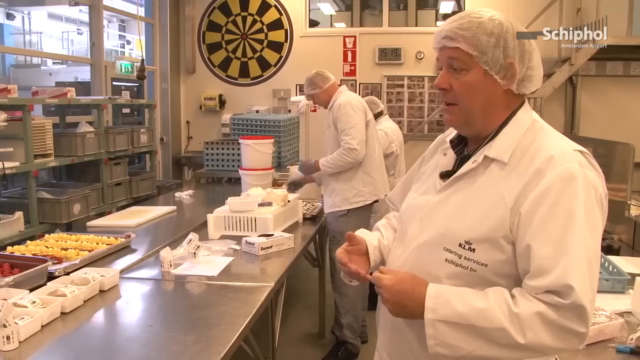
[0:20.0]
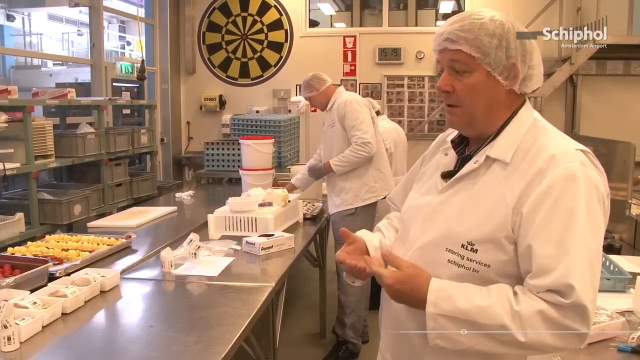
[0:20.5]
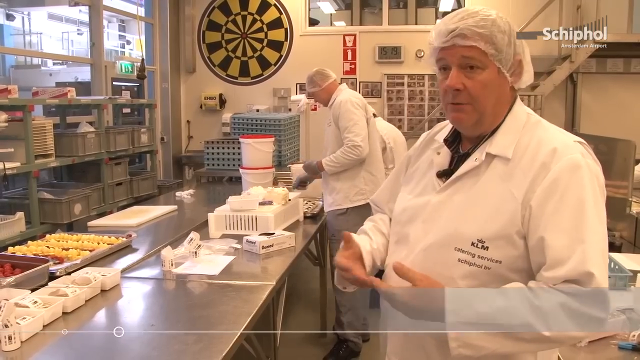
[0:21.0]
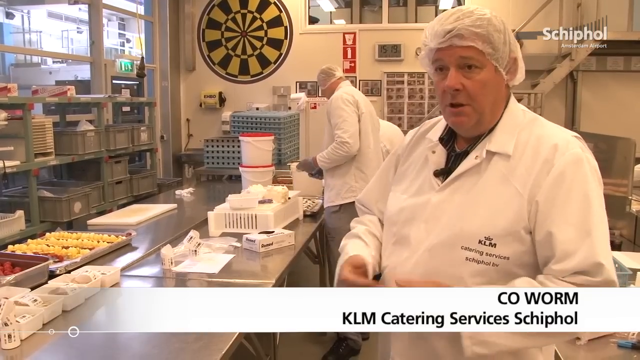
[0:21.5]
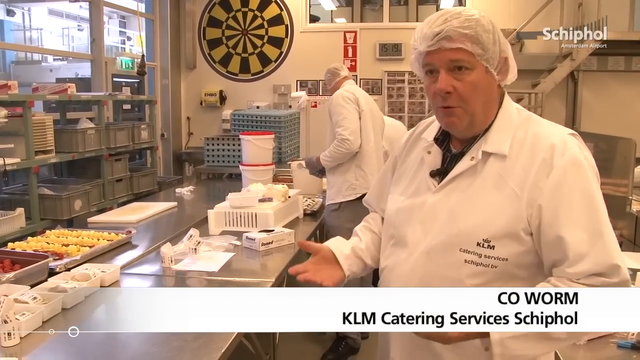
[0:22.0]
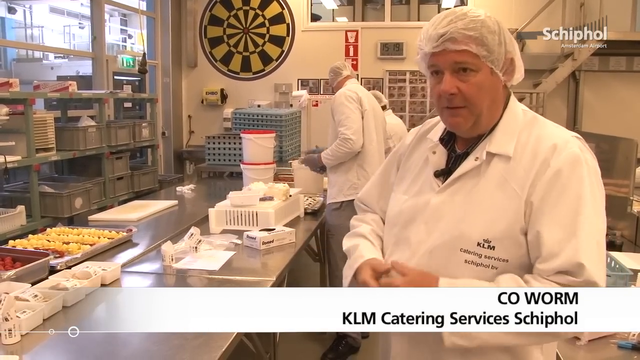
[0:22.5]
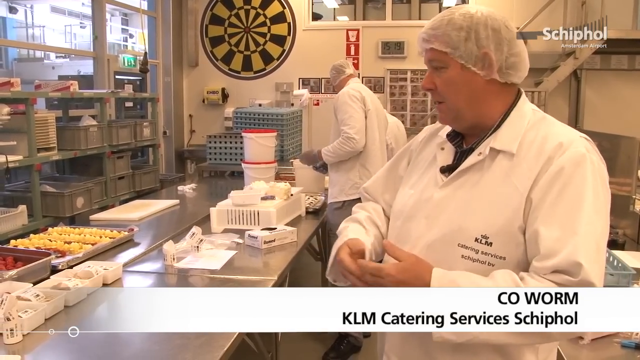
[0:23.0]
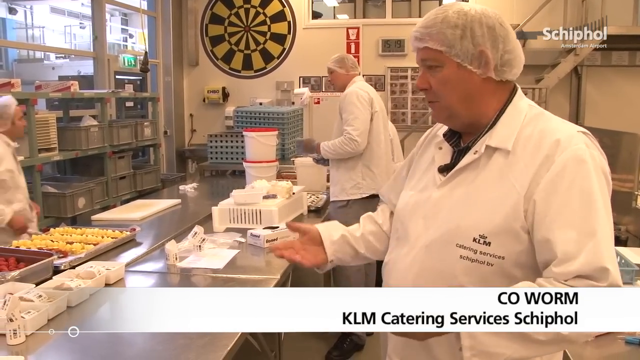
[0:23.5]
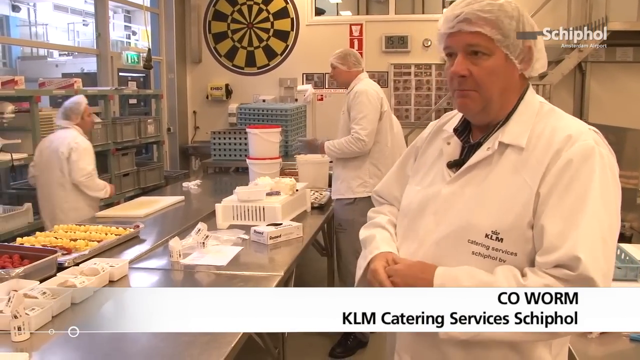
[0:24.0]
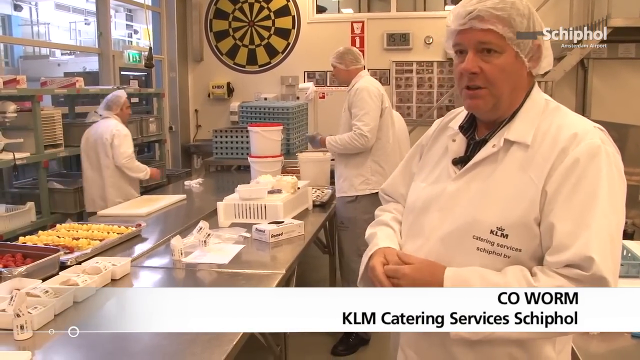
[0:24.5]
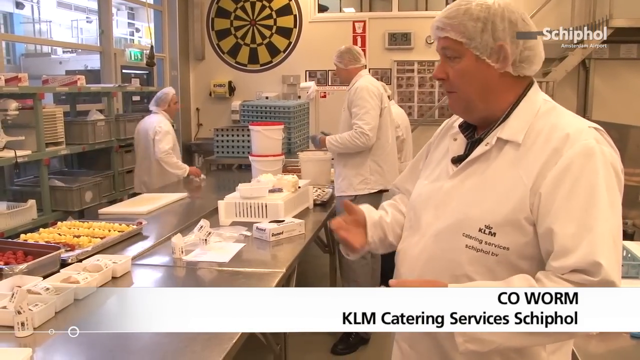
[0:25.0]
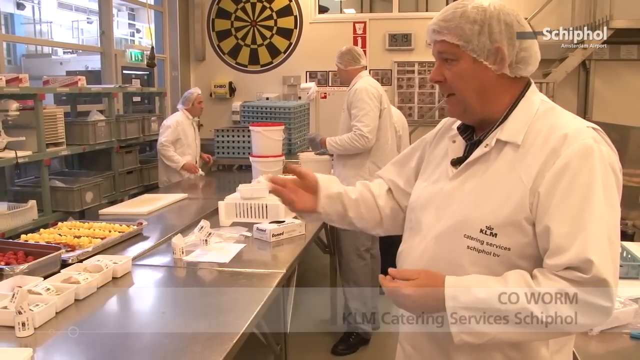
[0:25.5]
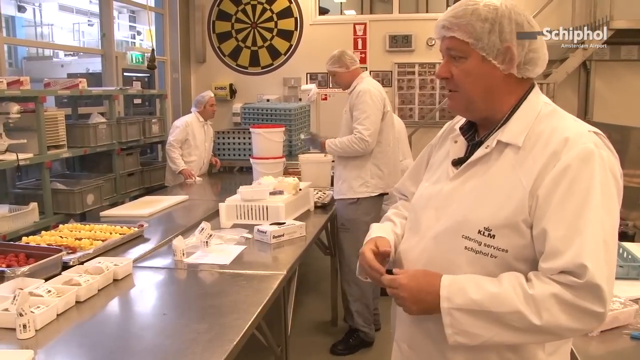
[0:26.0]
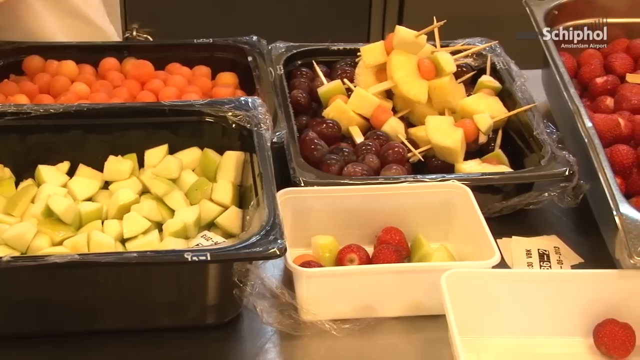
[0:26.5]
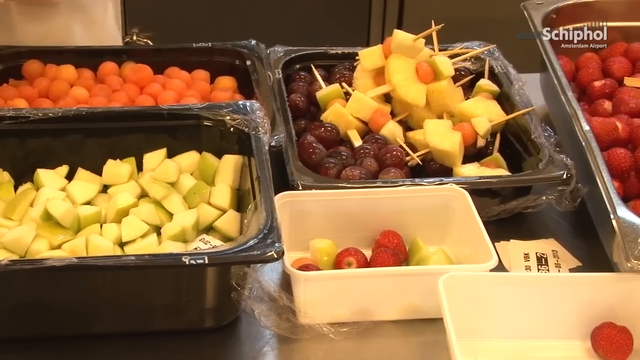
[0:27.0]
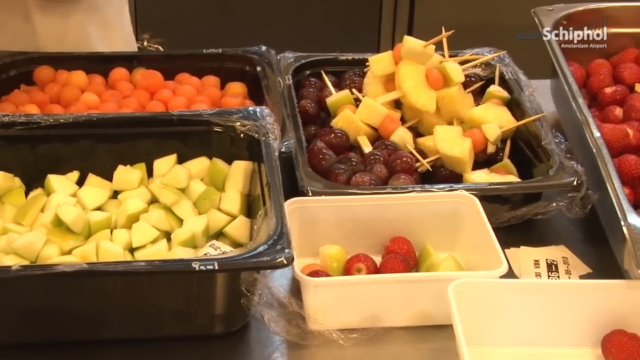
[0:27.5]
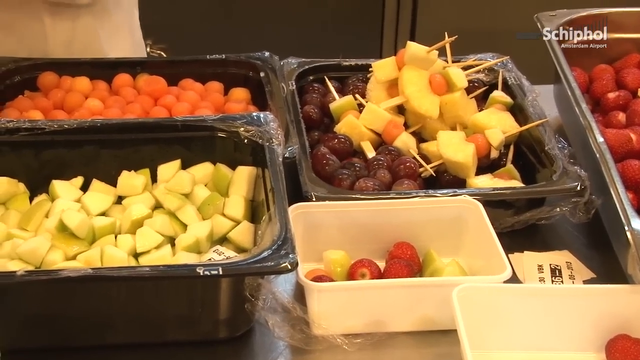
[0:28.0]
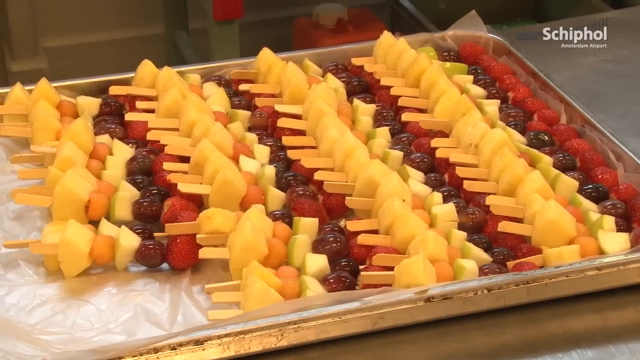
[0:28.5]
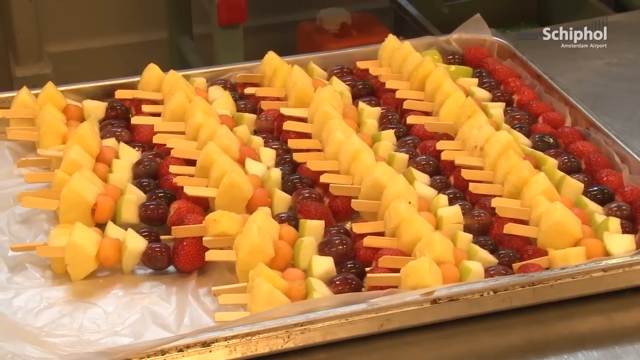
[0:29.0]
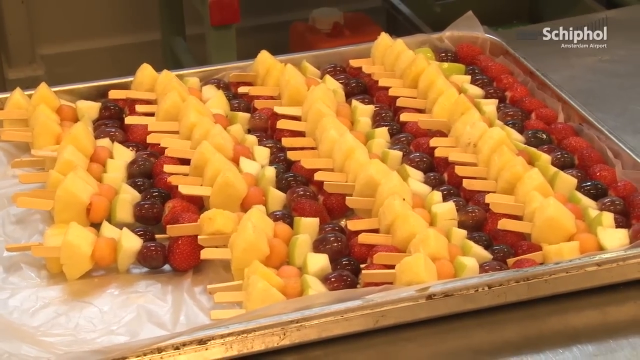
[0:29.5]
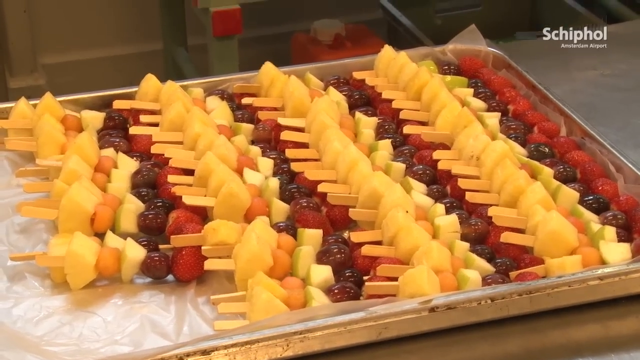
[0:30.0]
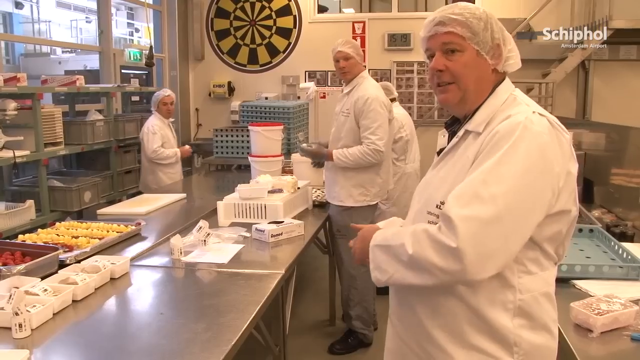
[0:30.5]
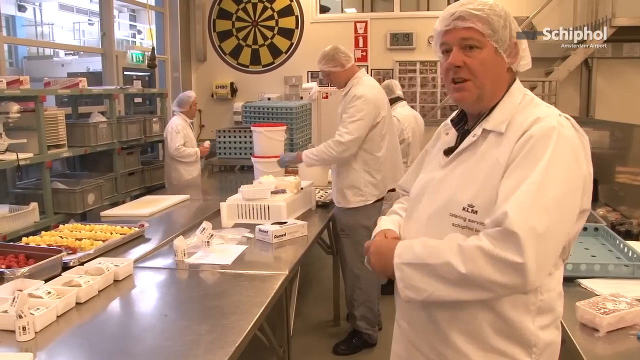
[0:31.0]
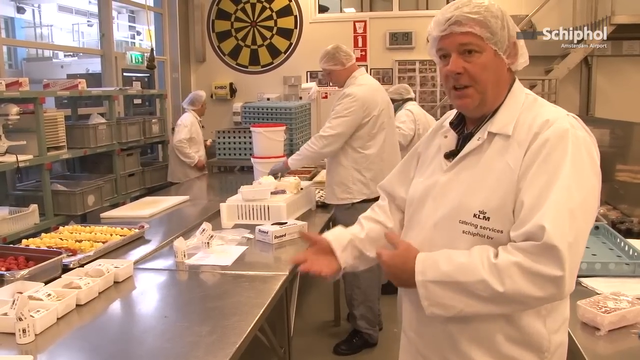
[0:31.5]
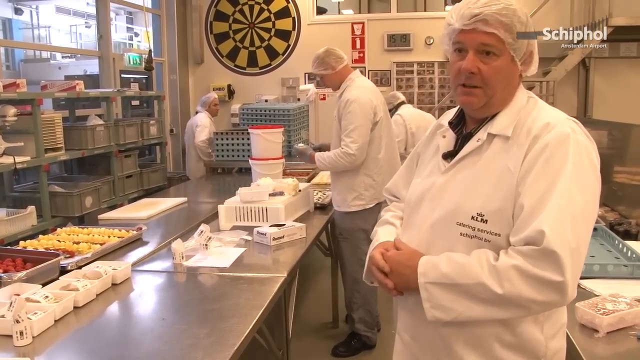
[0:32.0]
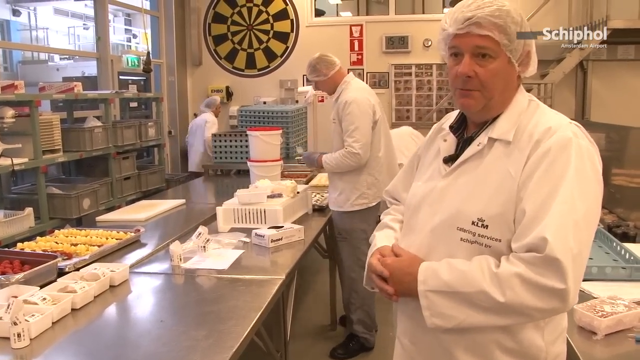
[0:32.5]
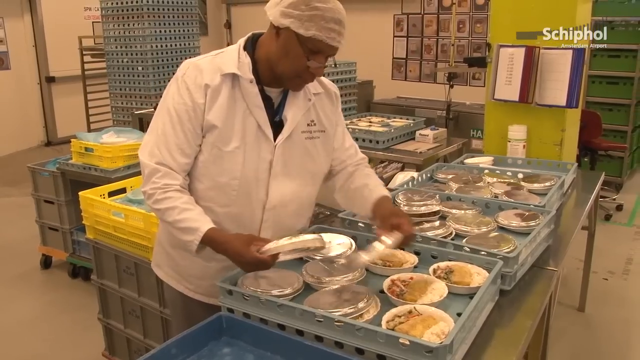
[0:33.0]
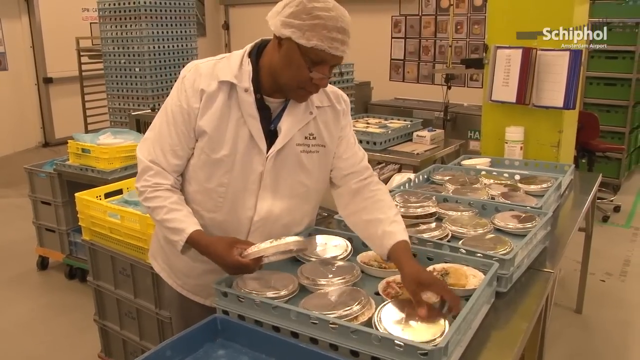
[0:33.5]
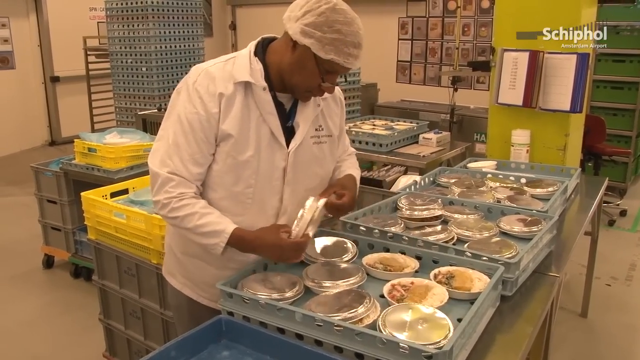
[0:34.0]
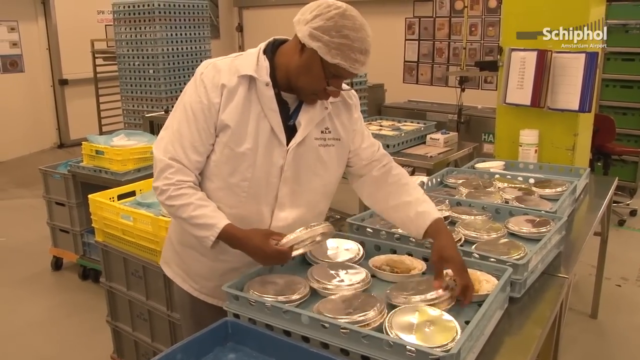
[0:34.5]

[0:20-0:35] A man in a white chef's uniform, with a white jacket and a head covering, is in a very large commercial kitchen. Three other chefs in similar wear are behind him. A large bullseye is on the wall, perhaps as a decoration. Trays of food are on the long stainless steel table where they are working. A close-up shows the trays, which hold what looks like hors d'oeuvres: cut fruit on skewers or cubed fruit. Another shot shows a man with food packaged in round plastic containers with transparent tops, stacking them into a blue plastic tray.